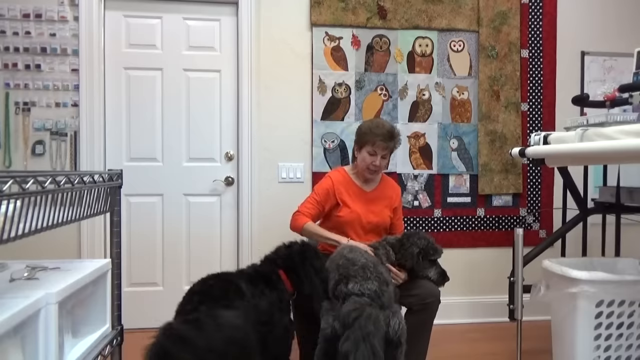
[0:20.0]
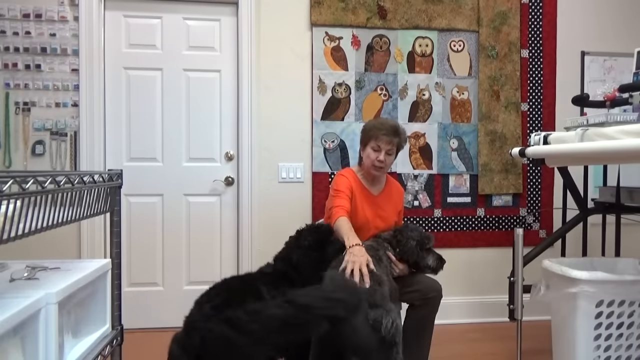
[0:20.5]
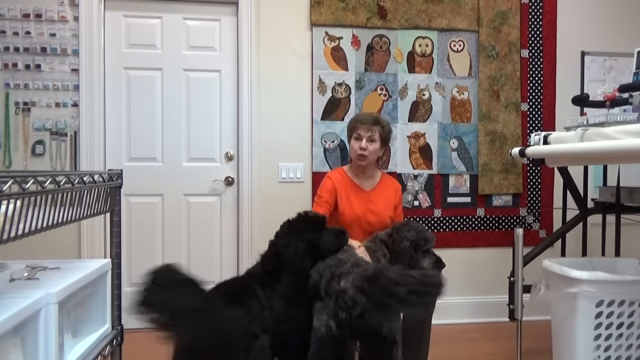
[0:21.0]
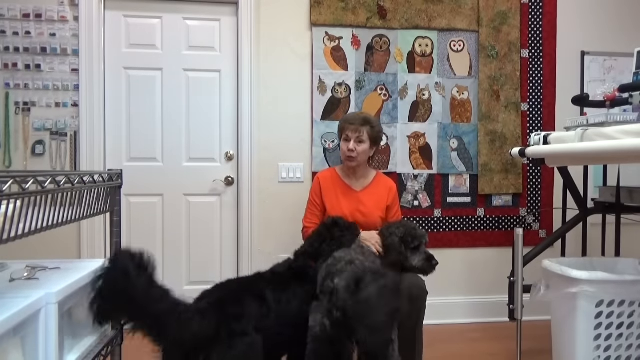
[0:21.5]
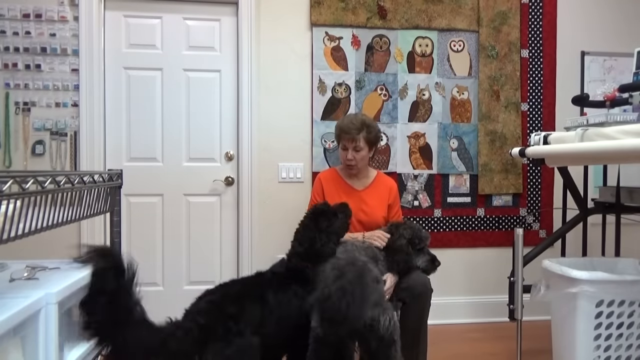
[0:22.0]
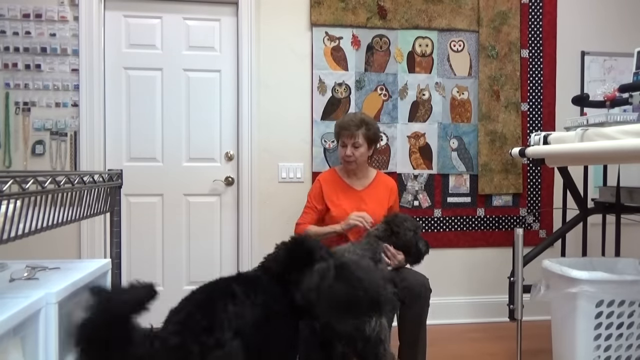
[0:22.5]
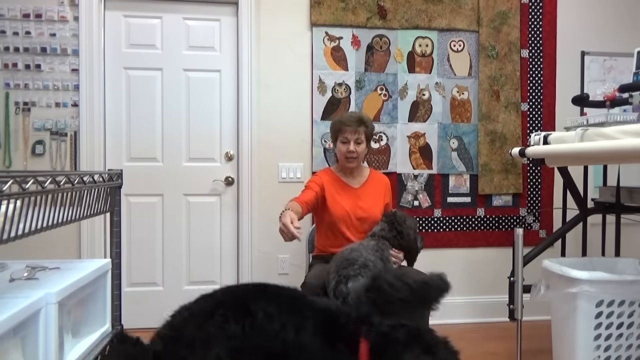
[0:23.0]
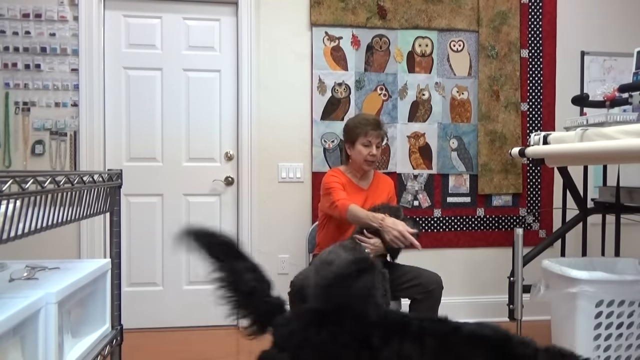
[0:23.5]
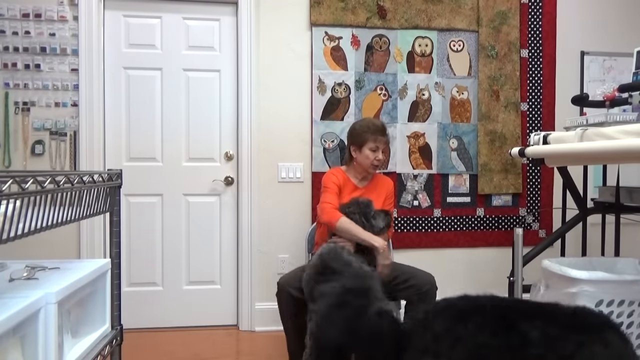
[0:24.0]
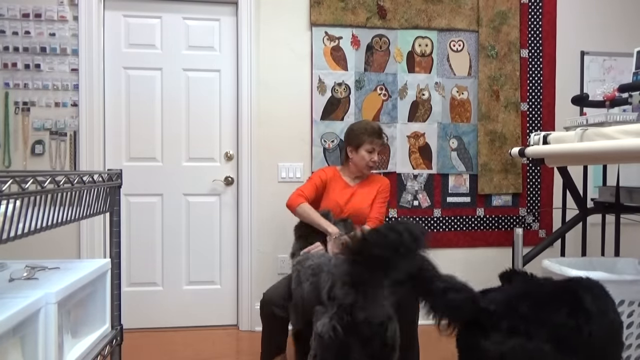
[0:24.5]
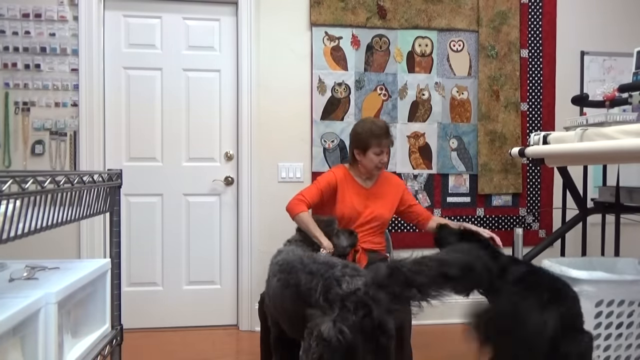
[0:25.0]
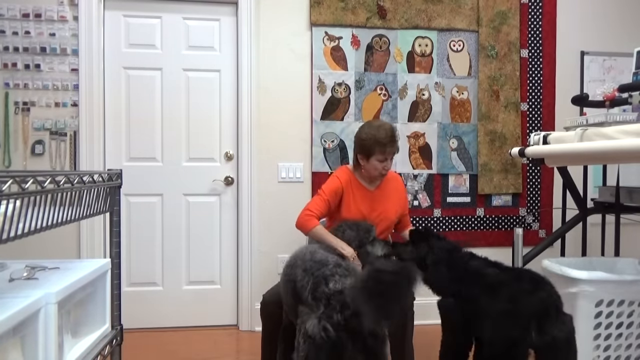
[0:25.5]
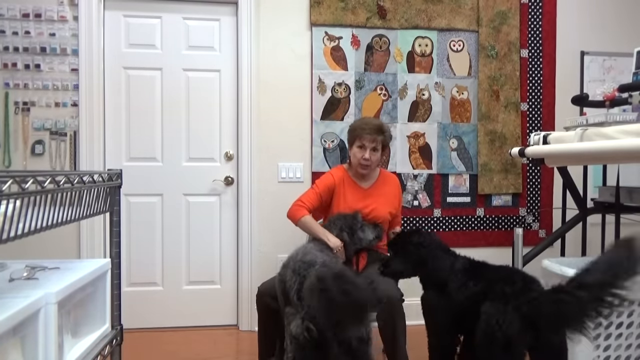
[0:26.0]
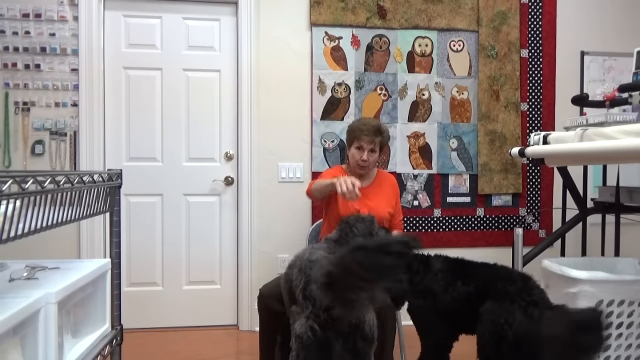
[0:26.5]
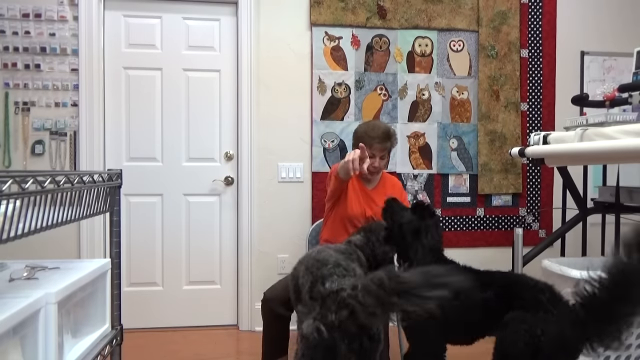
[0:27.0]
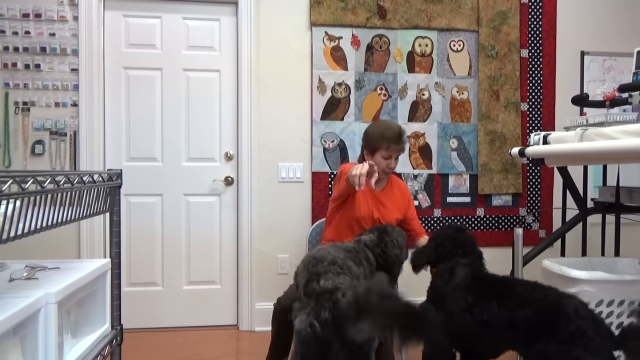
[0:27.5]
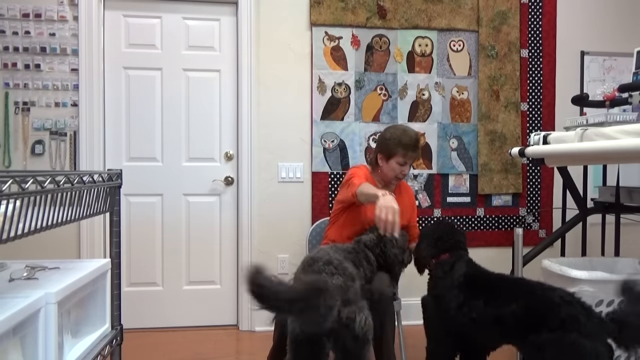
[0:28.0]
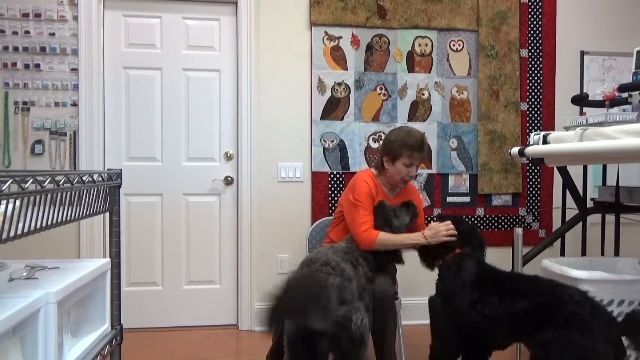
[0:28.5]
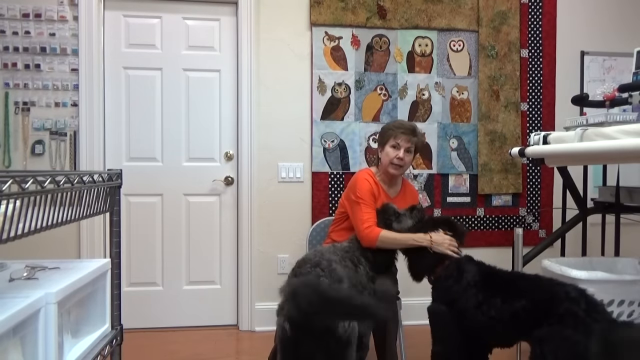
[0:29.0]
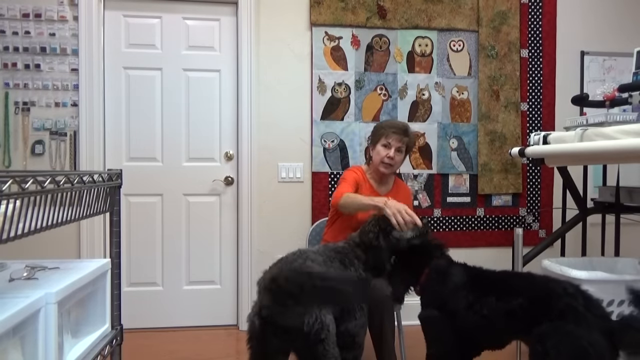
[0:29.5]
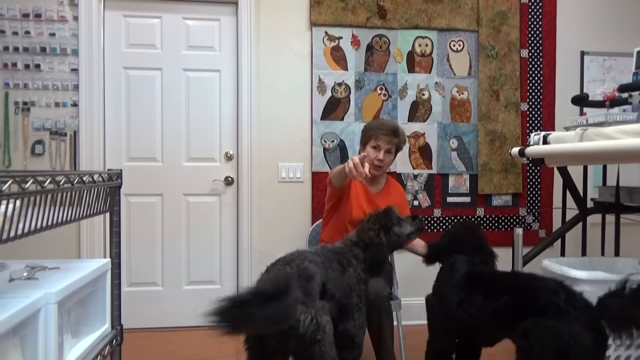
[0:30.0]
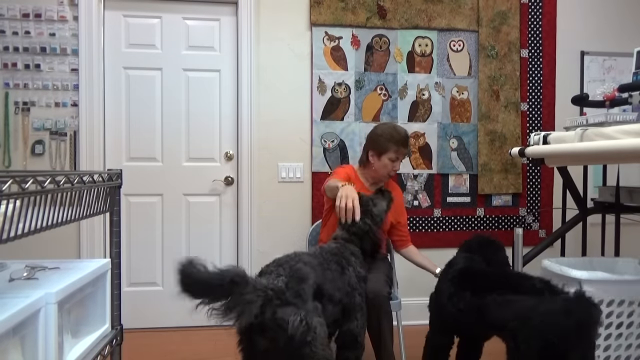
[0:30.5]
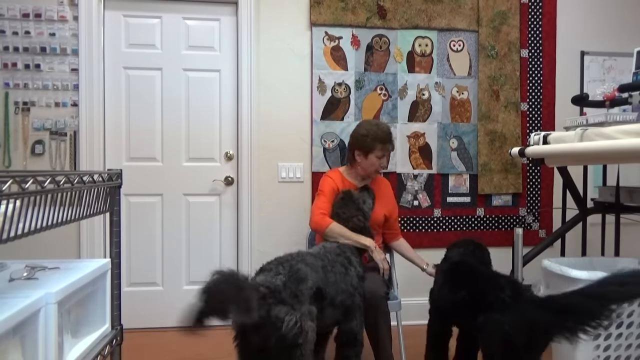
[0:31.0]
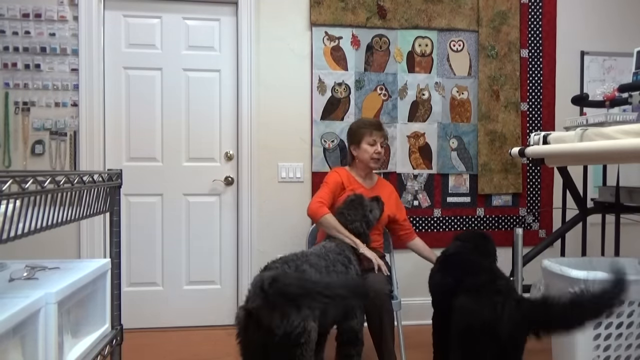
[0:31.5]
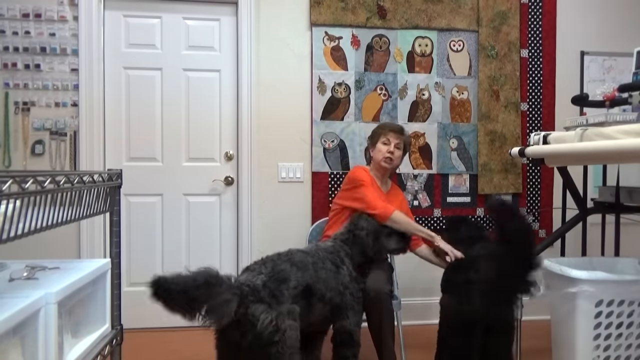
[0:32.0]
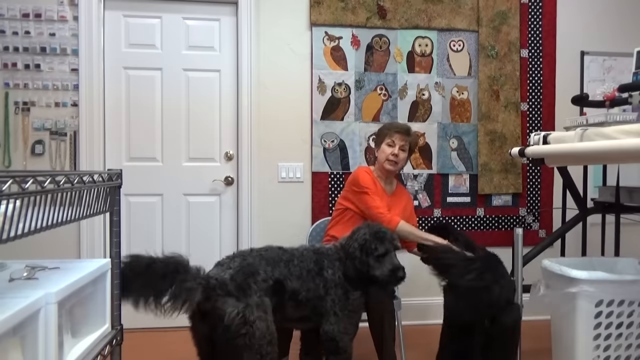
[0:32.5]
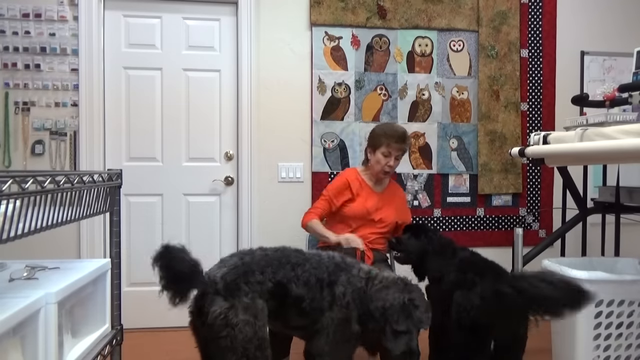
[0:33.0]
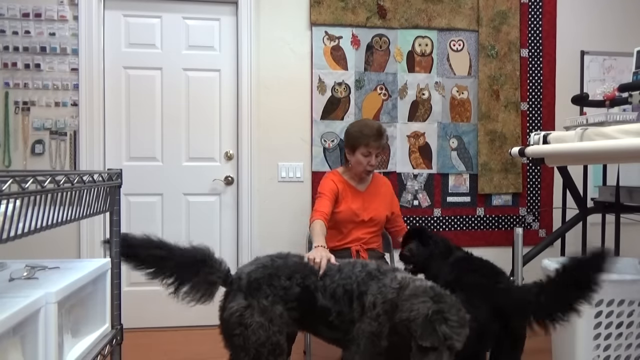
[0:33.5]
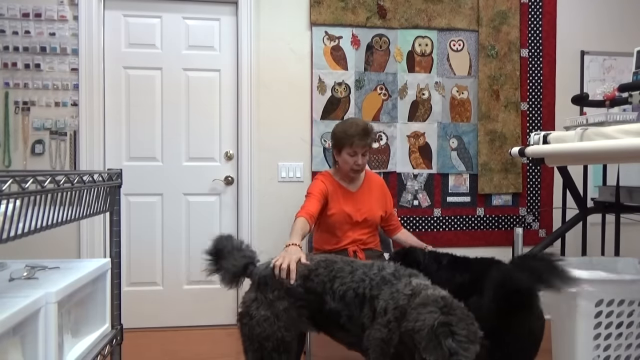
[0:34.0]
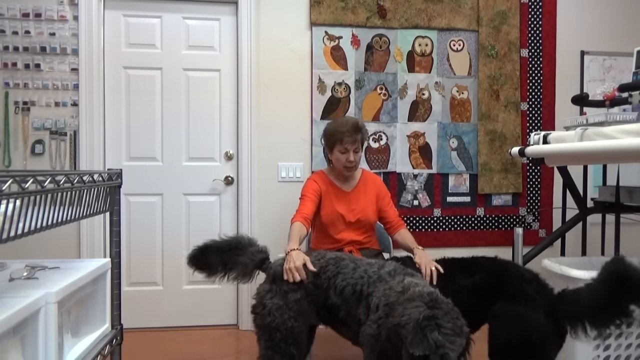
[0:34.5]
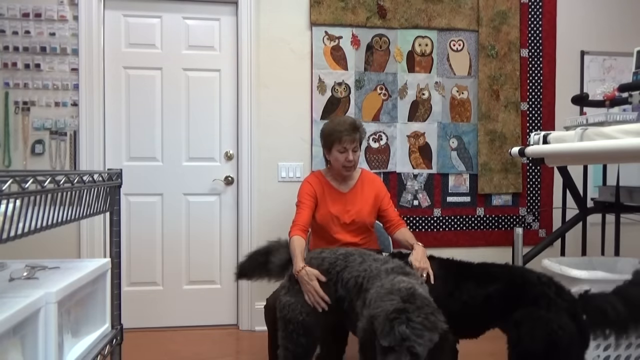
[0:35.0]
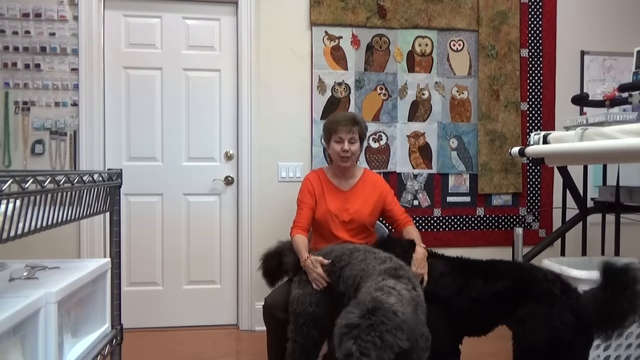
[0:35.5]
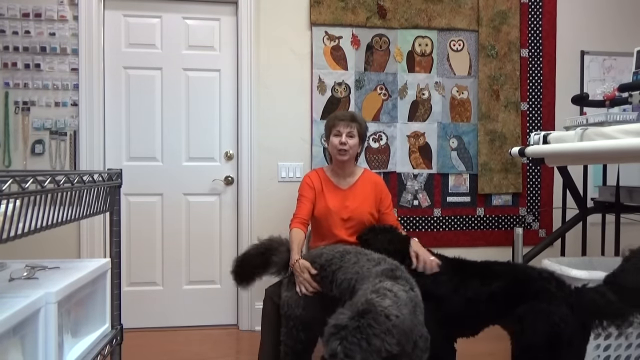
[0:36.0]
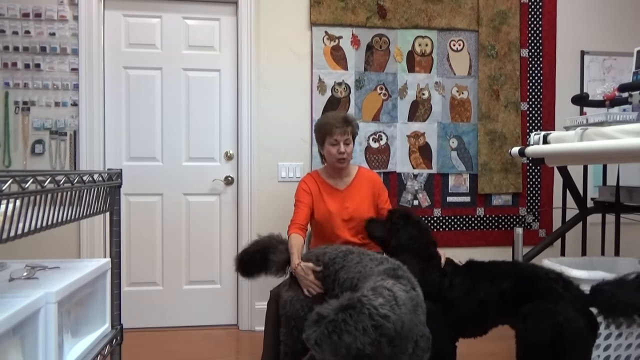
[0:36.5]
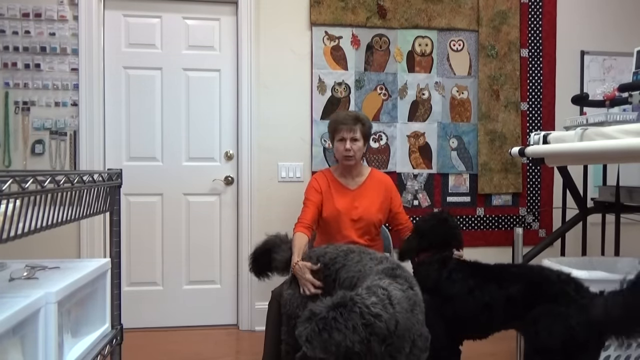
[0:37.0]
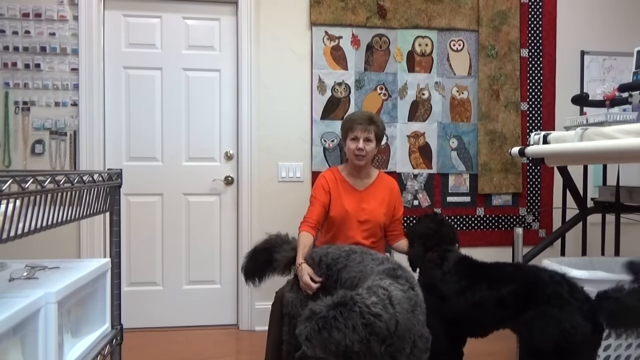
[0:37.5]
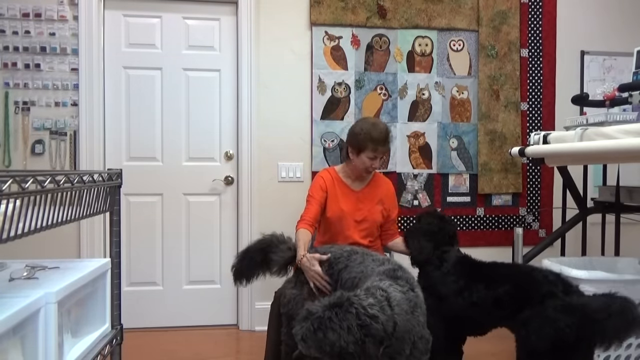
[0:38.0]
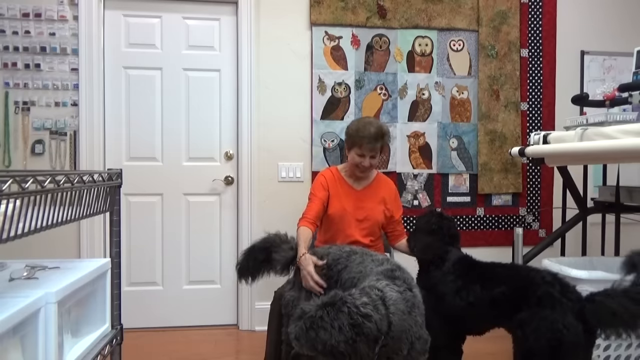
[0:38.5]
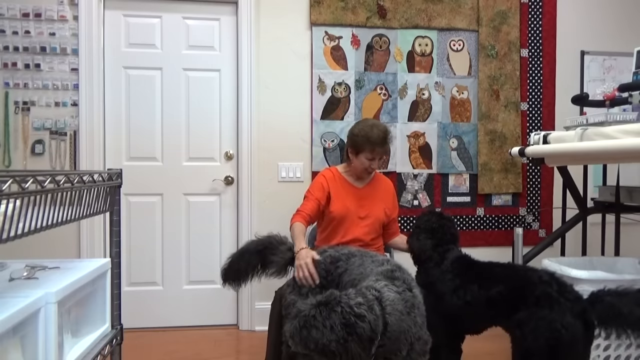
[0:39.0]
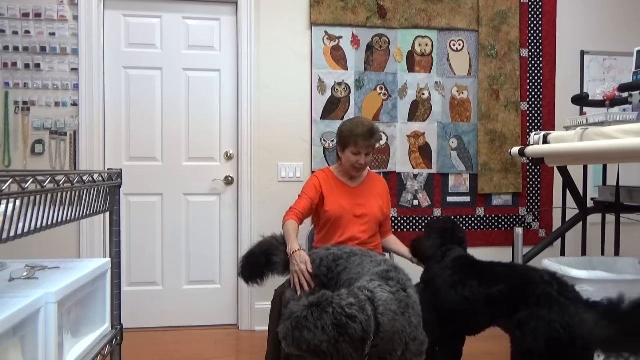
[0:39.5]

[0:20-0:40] The two dogs keep playing with the woman and seem interested in what she is doing and how she is sitting in the chair. She seems to point at the camera, and she is apparently speaking, seemingly about the dogs. Both dogs look at her, and another one turns around, facing the camera. One dog seems much darker than the other: one seems to be gray and the other seems pure midnight black, though they seem to be the exact same breed. In the top left, some type of devices are hooked up on the wall.